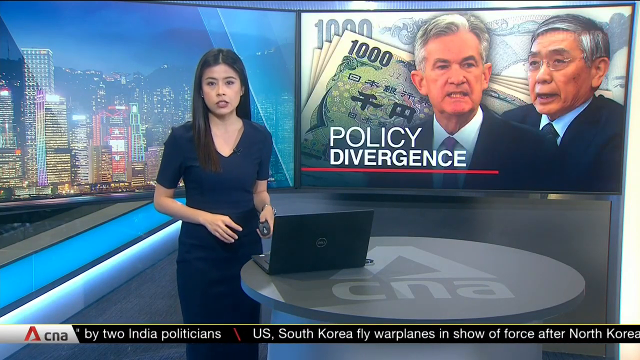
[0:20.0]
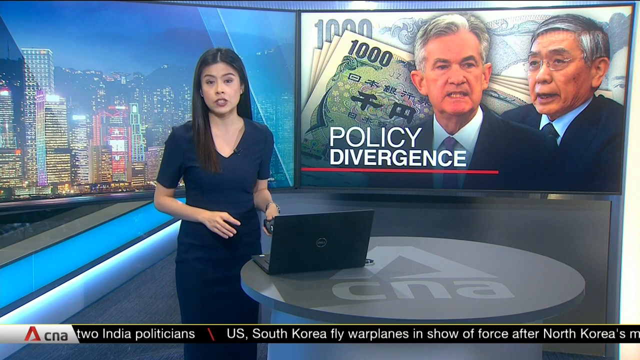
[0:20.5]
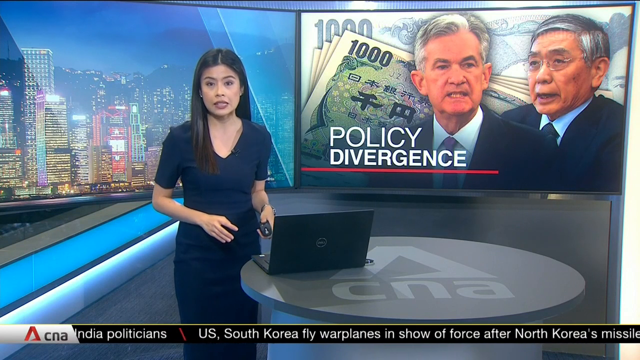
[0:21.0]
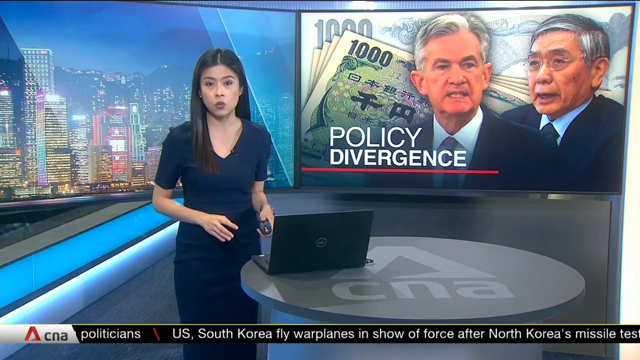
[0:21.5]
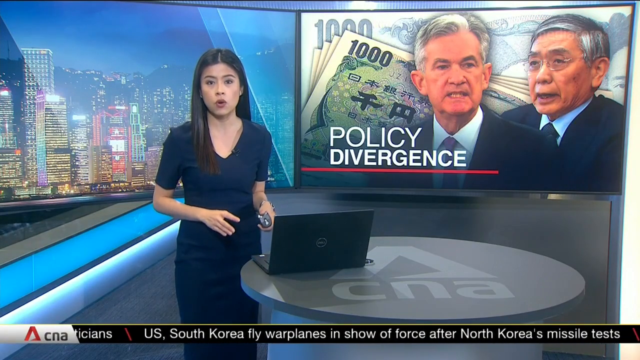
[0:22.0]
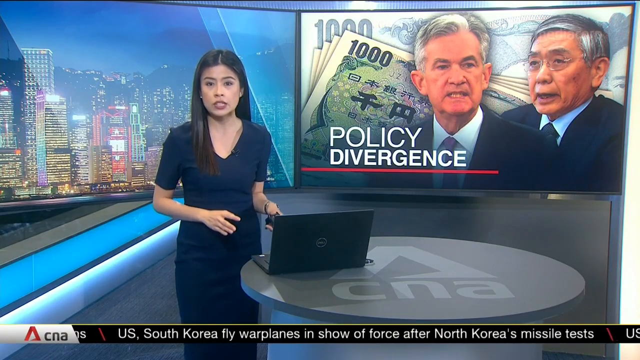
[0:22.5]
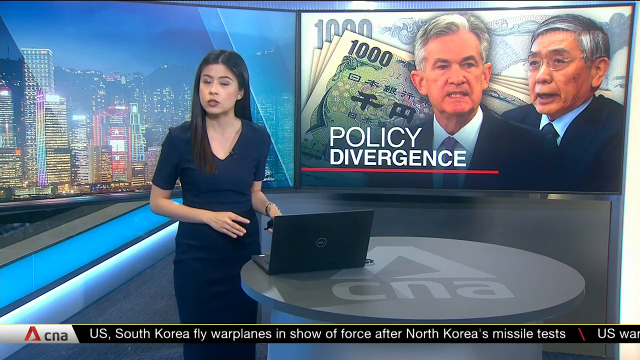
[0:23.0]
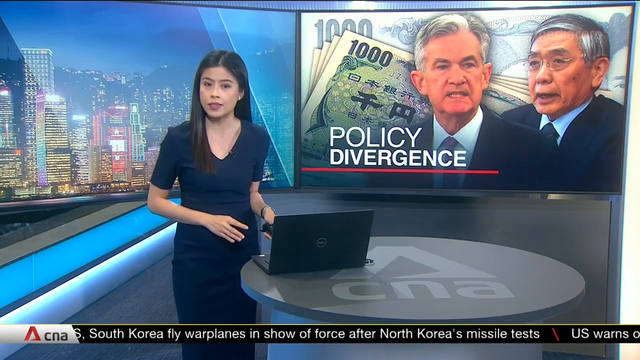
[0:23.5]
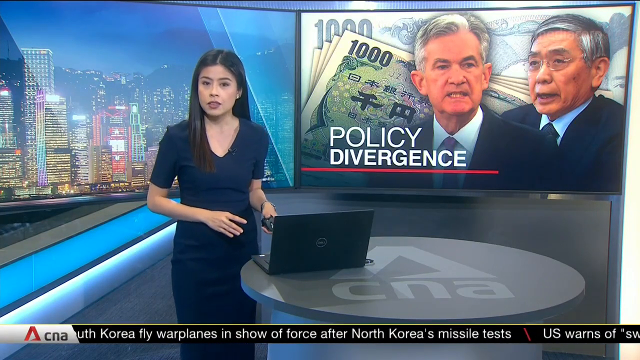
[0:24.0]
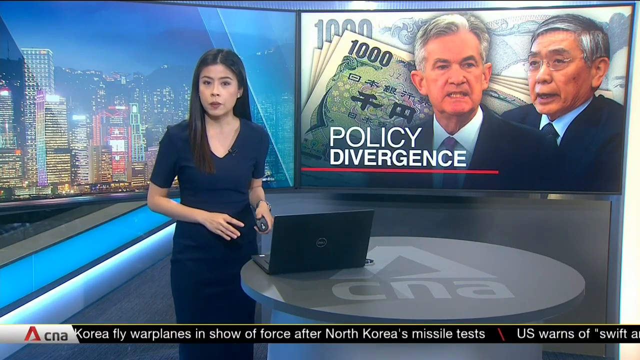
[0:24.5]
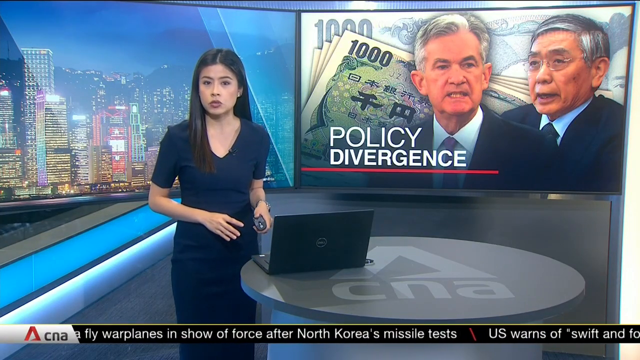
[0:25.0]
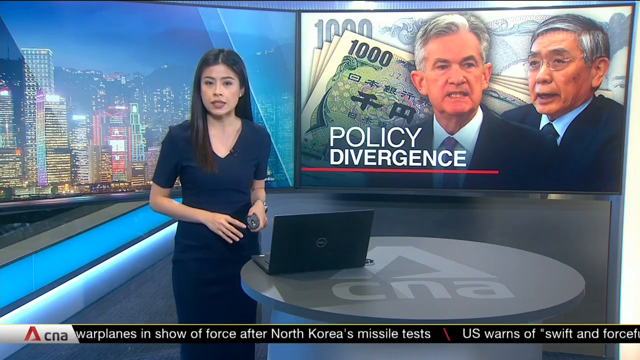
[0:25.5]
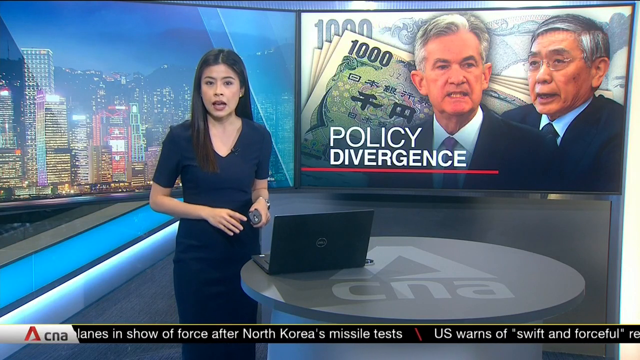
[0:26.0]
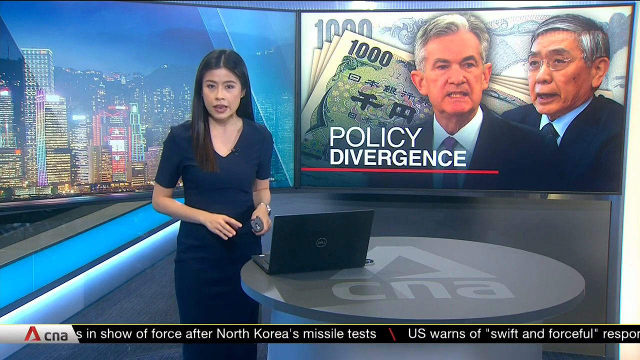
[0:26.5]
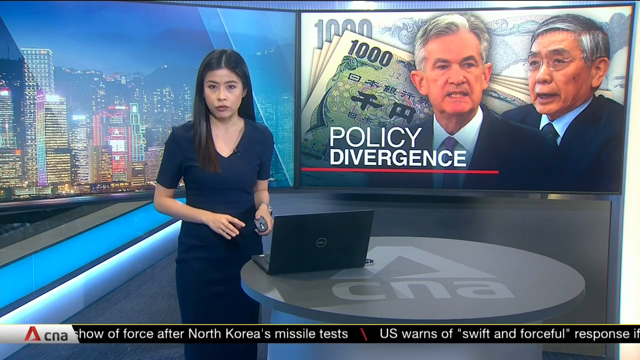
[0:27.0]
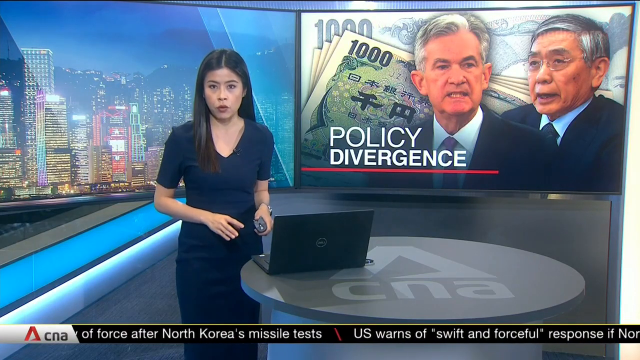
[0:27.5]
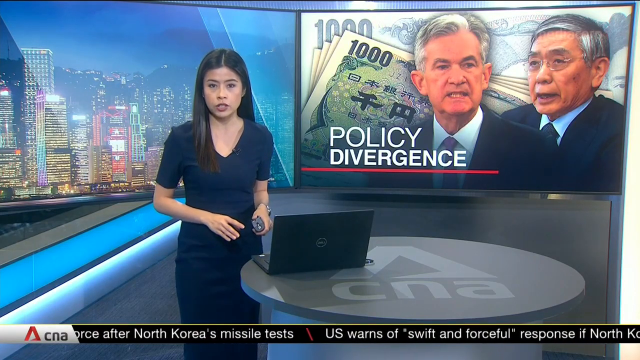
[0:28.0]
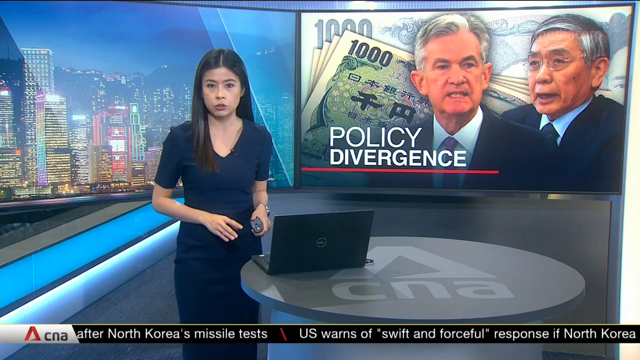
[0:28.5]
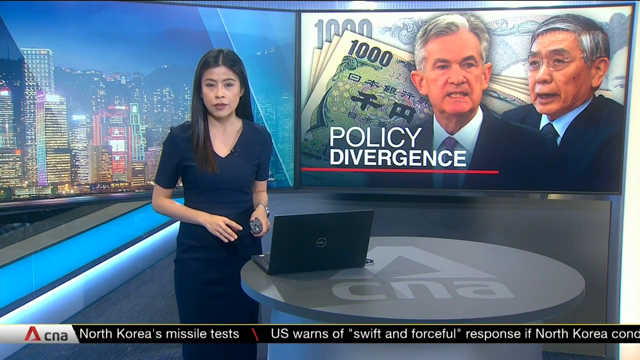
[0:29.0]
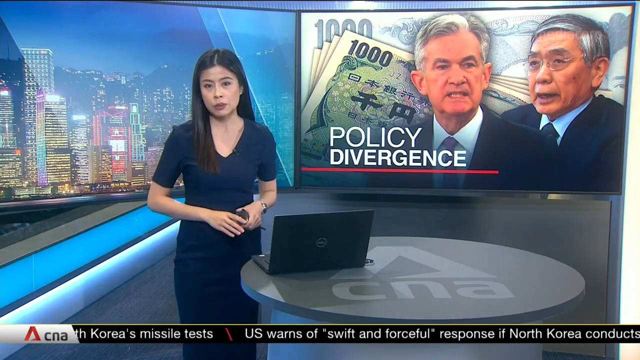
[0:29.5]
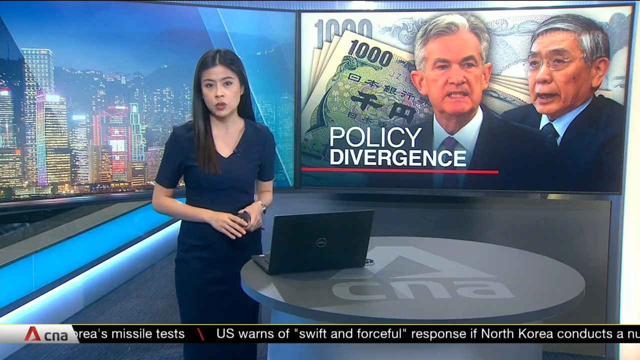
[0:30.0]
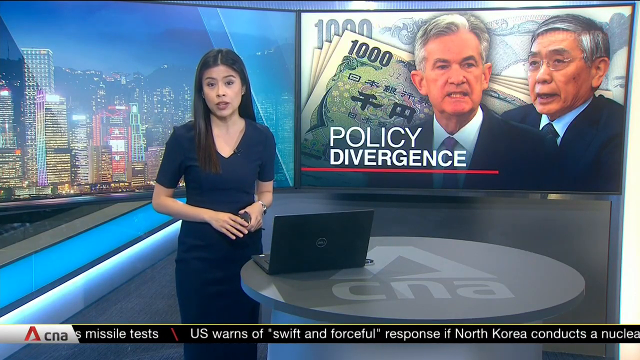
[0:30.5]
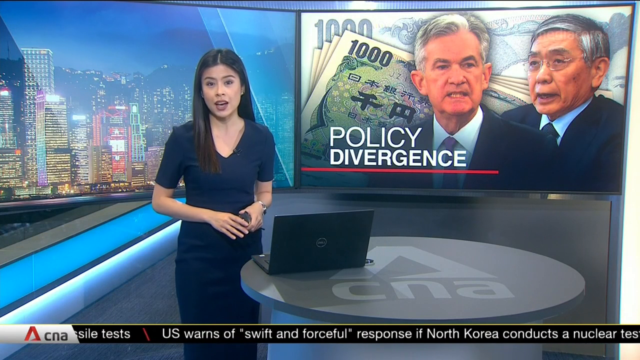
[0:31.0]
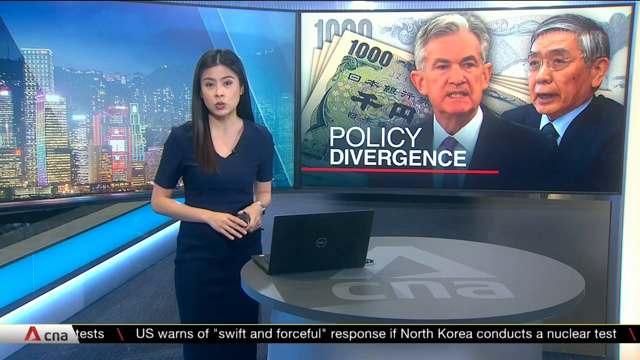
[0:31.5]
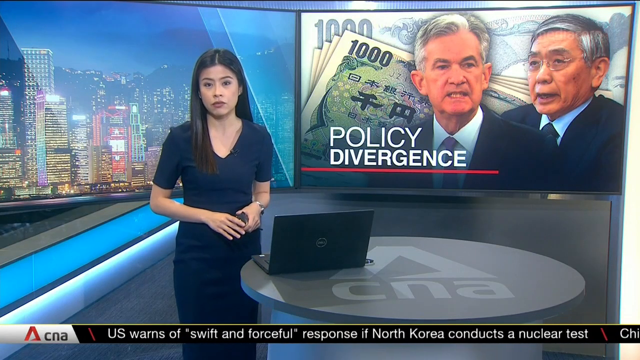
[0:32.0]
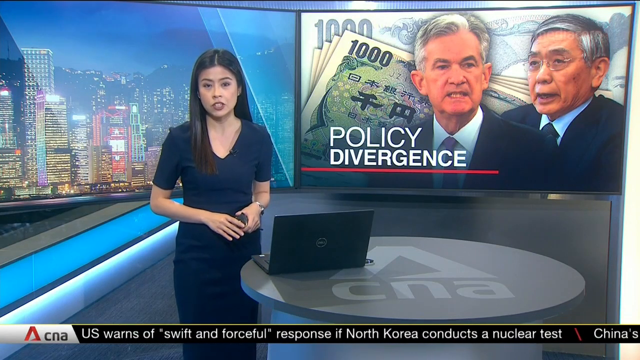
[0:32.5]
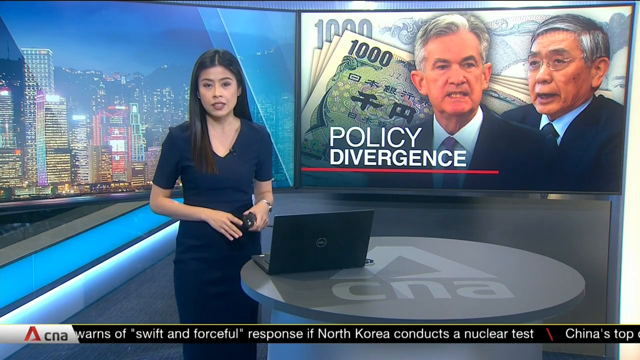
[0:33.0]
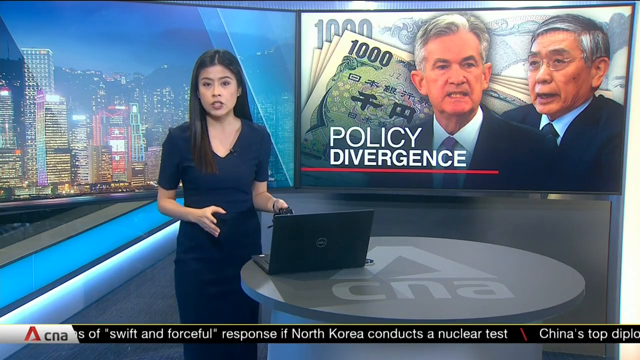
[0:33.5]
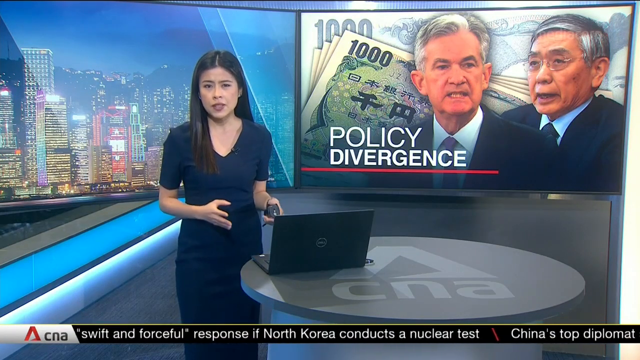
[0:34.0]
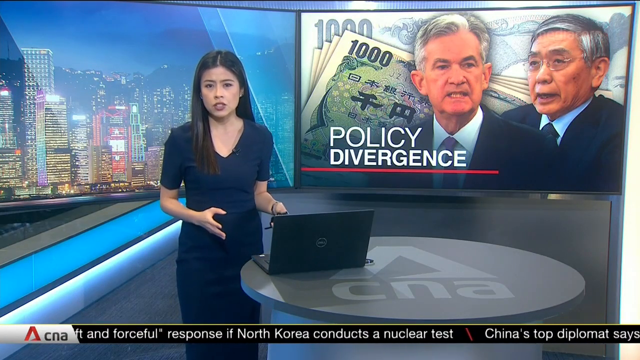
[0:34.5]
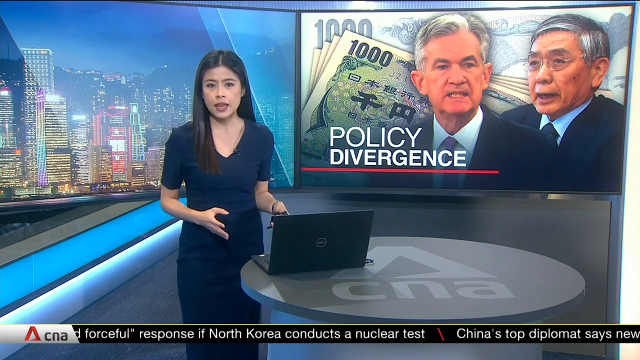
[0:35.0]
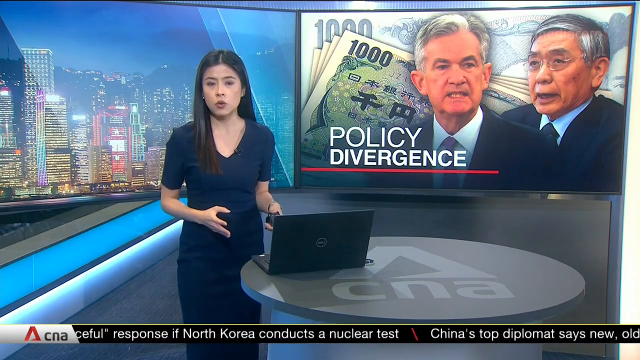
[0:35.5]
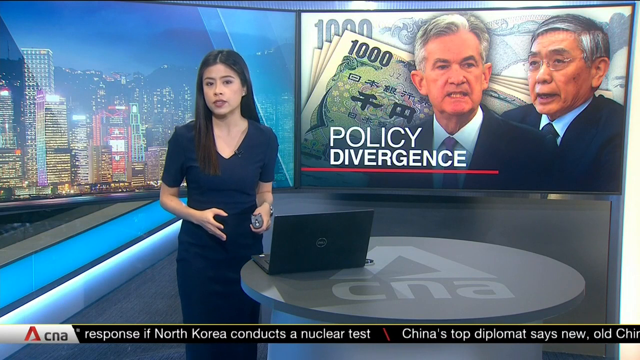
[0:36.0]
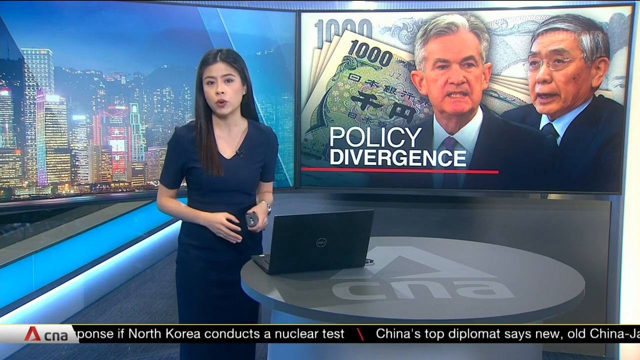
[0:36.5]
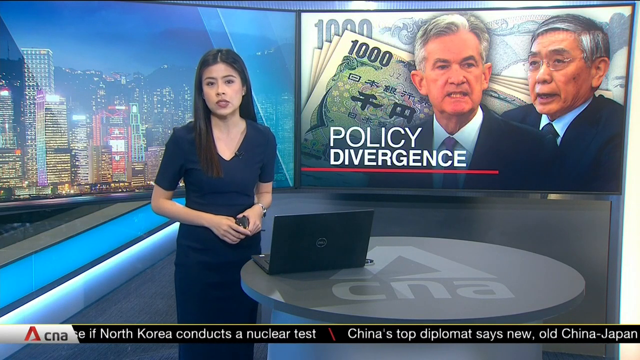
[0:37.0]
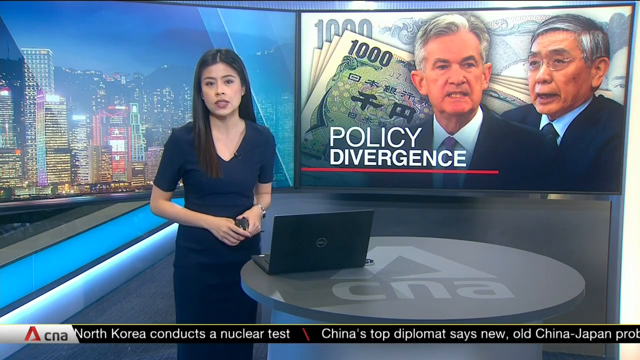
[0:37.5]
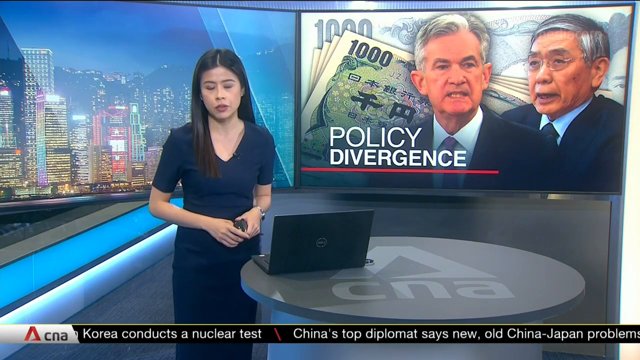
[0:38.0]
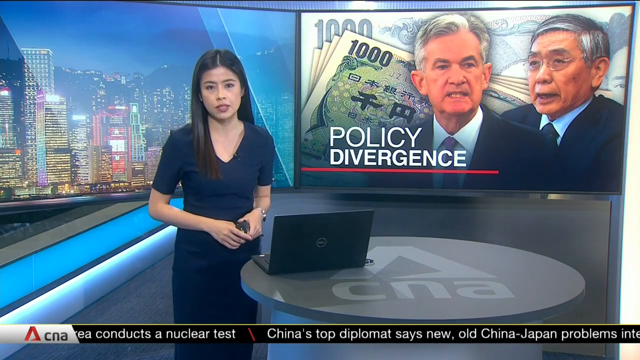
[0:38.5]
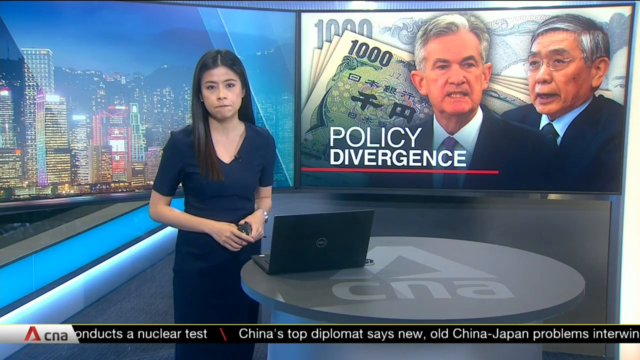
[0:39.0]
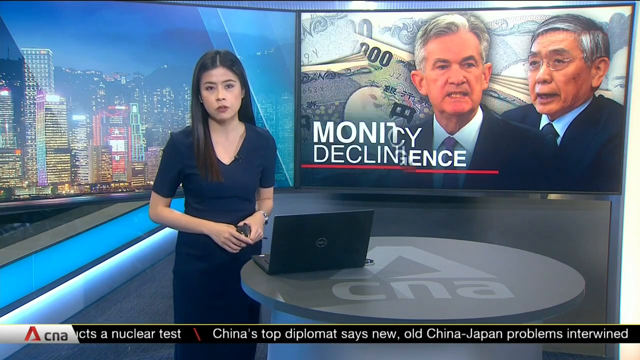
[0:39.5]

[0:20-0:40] The same news correspondent has a part in her hair, which falls straight down to about the middle of her back. Text reads "policy divergence" with a red line underneath it. A man who appears to be the head of the U.S. Federal Reserve is shown with salt-and-pepper hair and a dark suit. An Asian man wearing glasses is also shown, possibly his equivalent in Japan. A ticker reads "U.S. warns of swift and forceful response if North Korea conducts a nuclear test," followed by "China's top diplomat says new old China Japan problems intertwined."